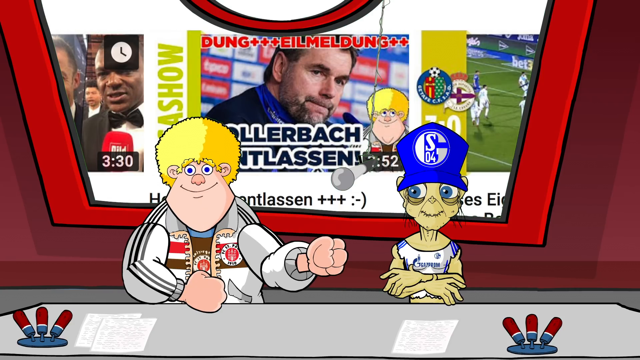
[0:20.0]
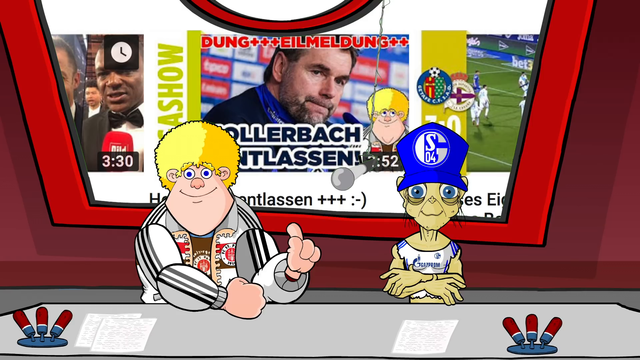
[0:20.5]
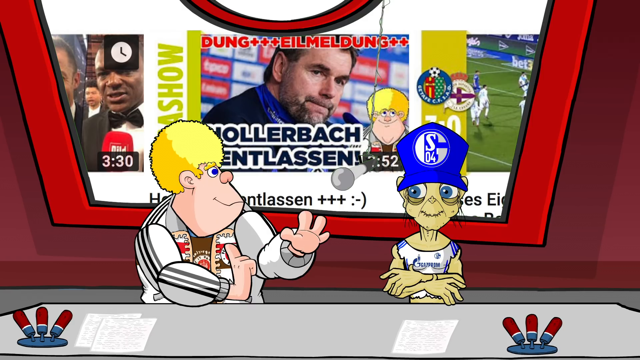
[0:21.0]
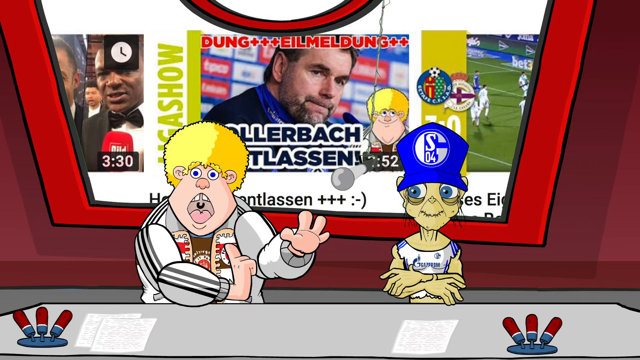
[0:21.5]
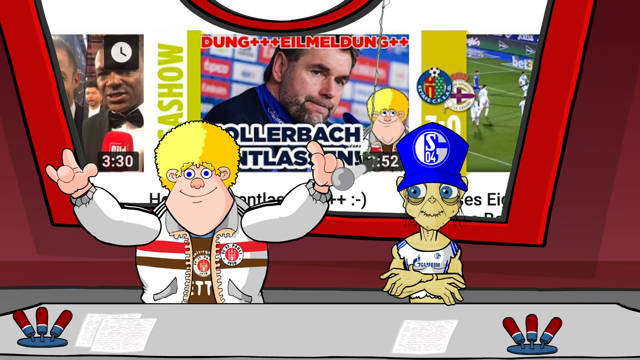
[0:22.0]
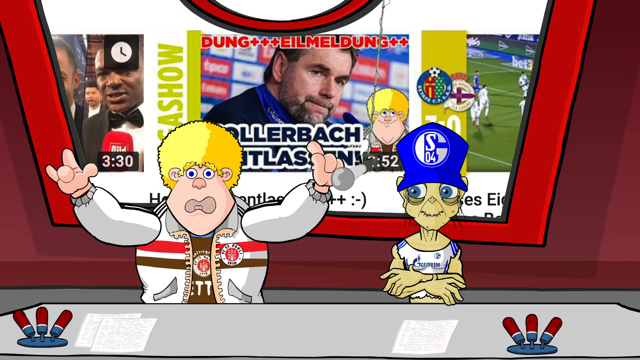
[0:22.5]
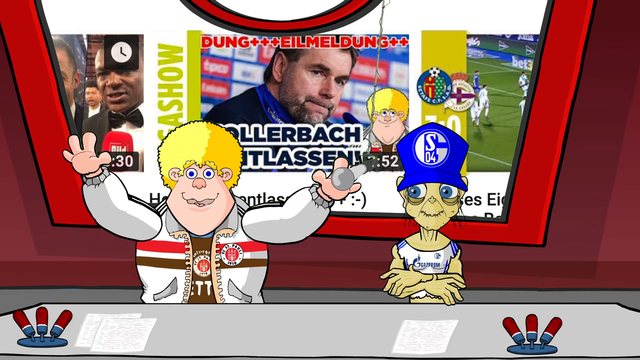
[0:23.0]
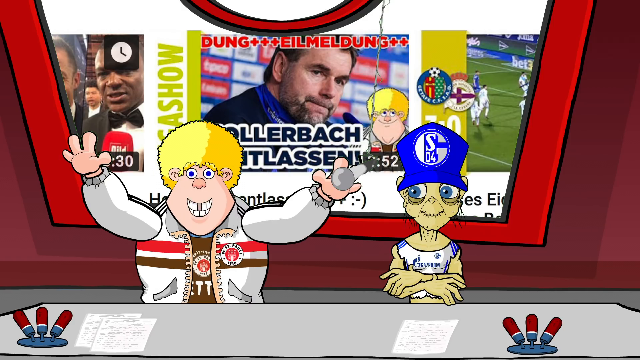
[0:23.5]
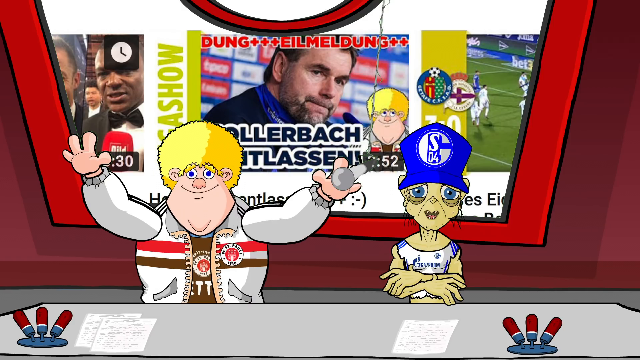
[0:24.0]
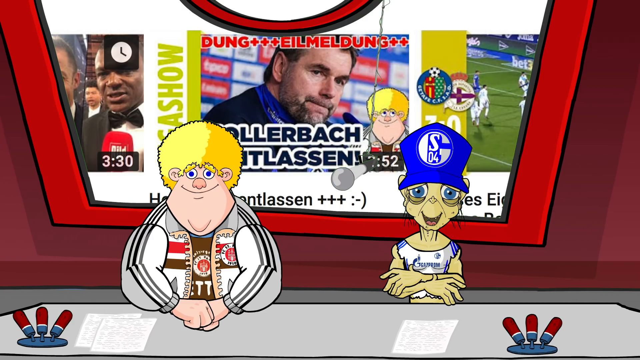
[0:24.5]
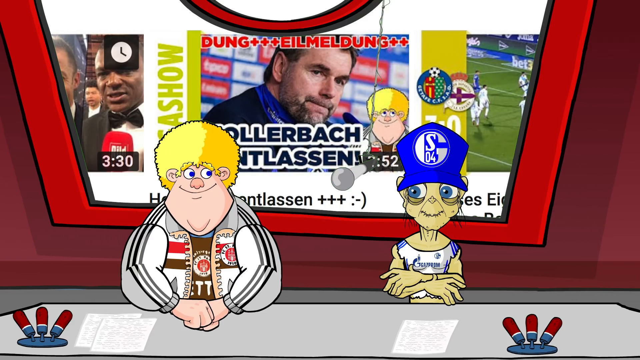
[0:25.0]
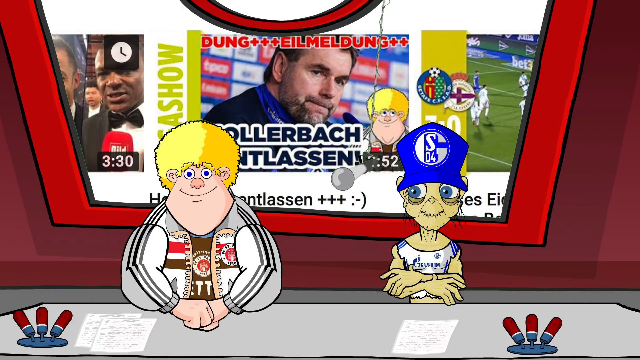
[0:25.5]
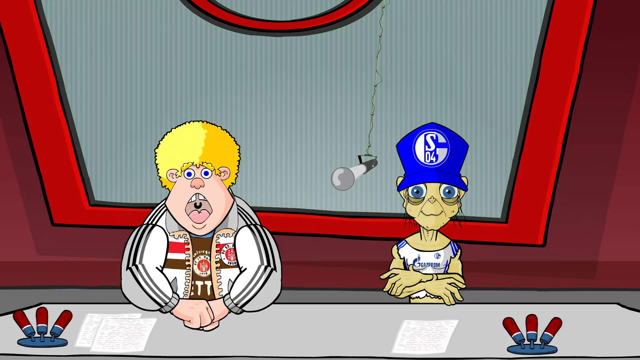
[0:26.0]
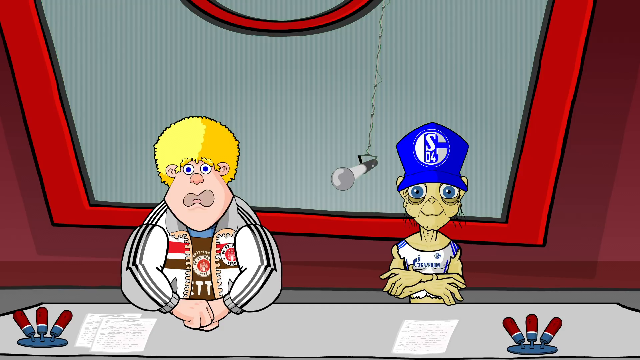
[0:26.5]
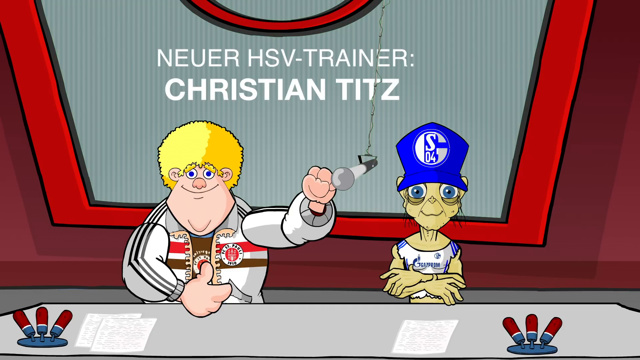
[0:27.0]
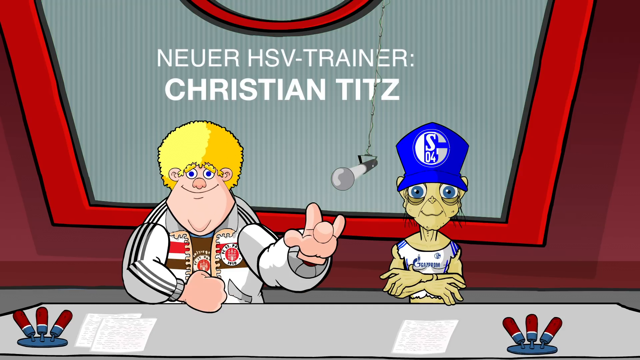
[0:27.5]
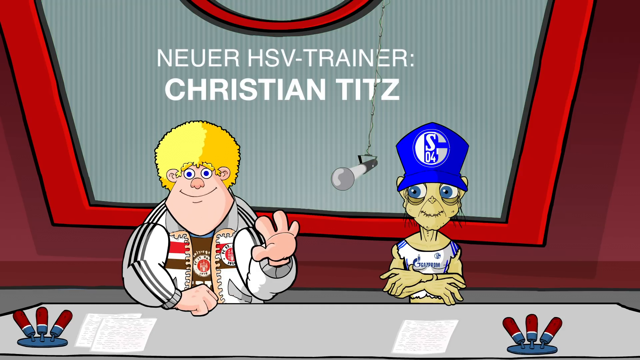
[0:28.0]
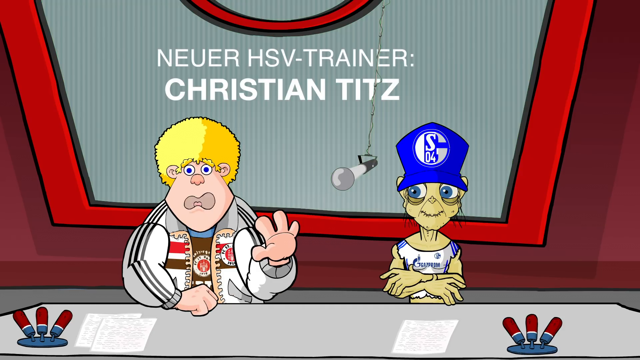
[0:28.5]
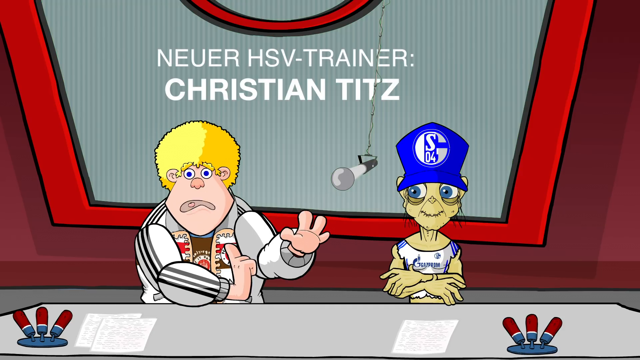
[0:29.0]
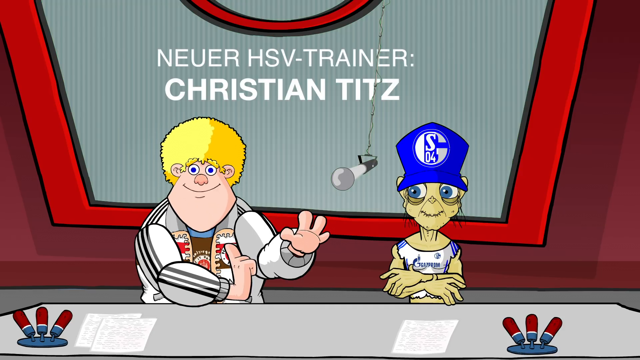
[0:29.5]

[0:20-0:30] The blonde-haired character with a large chin and a blue hat continues to be shown; this figure has gremlin-like skin and blue eyes. Characters are shown behind them, and the mouths of the two are moving as they apparently talk about the content shown behind them. The subjects behind them then swap away to a gray, sort of static screen, with no other subjects or screen swaps after that.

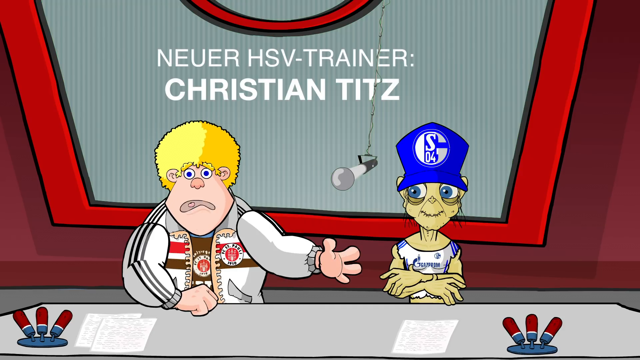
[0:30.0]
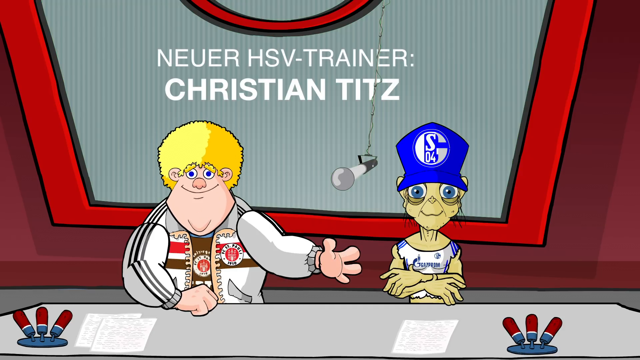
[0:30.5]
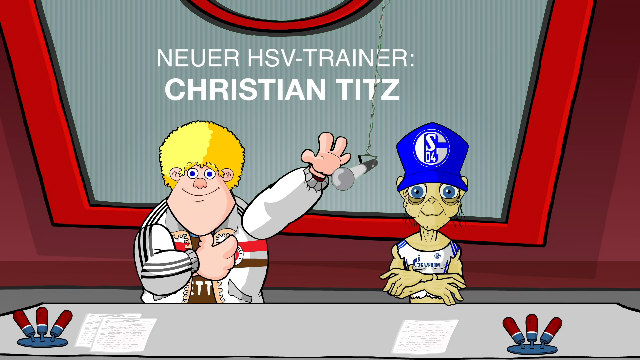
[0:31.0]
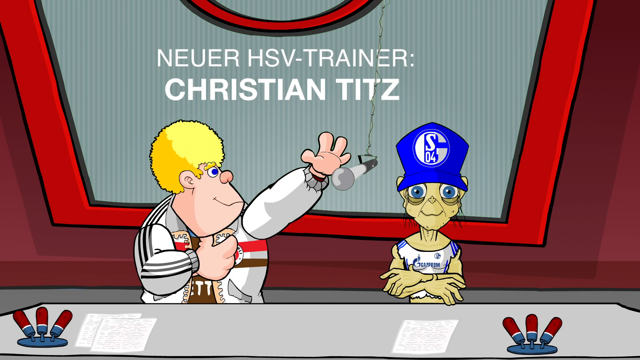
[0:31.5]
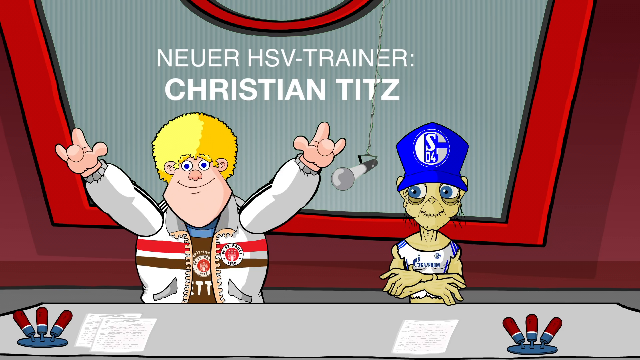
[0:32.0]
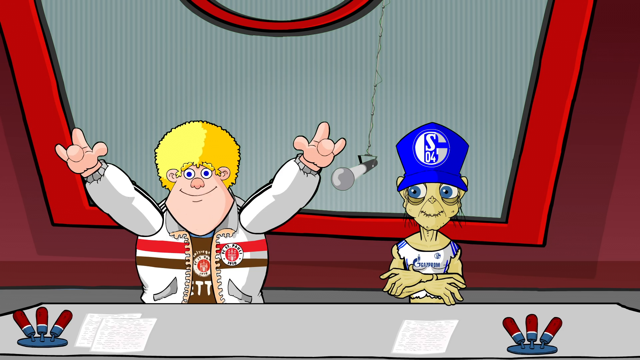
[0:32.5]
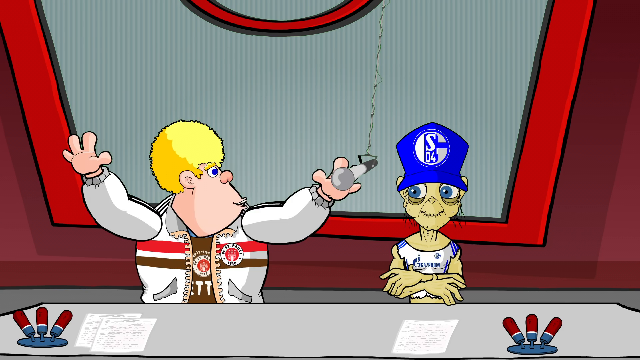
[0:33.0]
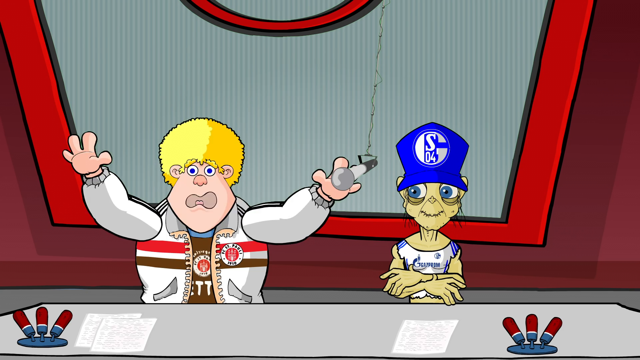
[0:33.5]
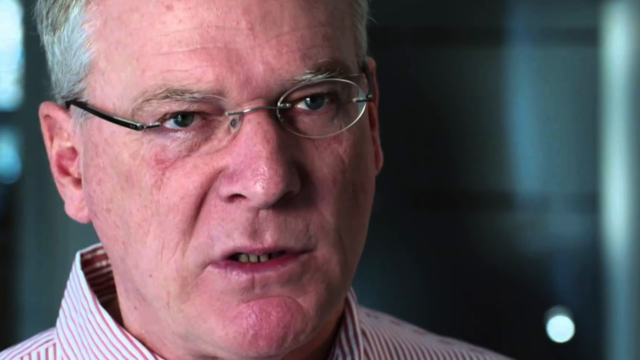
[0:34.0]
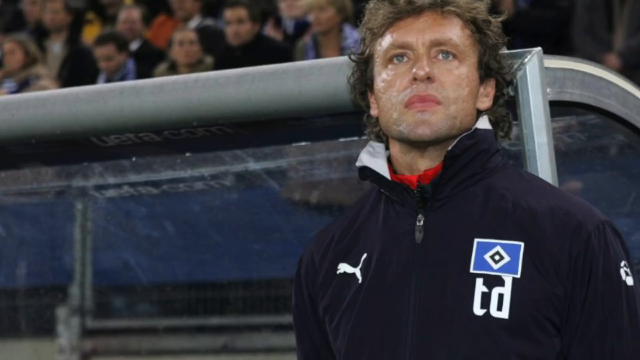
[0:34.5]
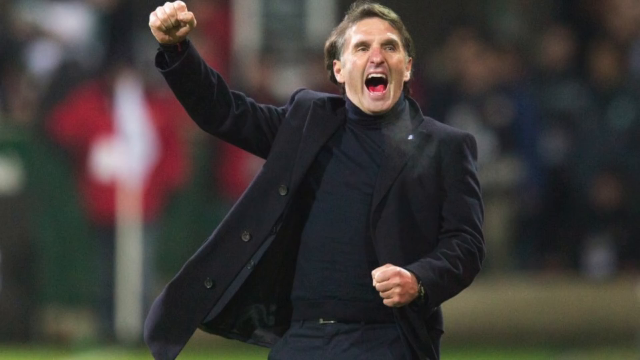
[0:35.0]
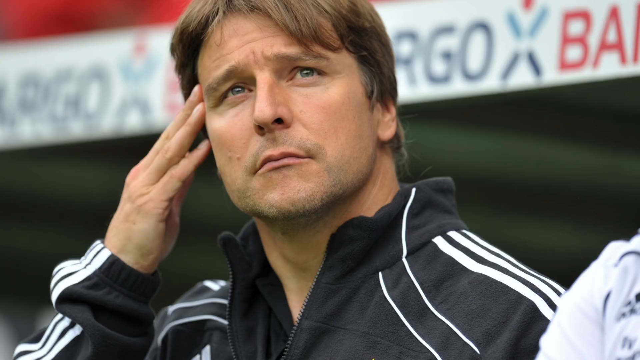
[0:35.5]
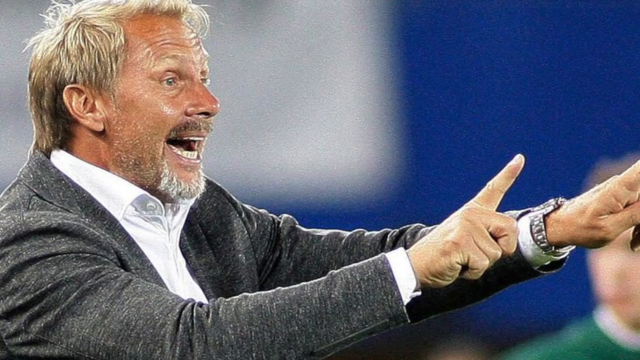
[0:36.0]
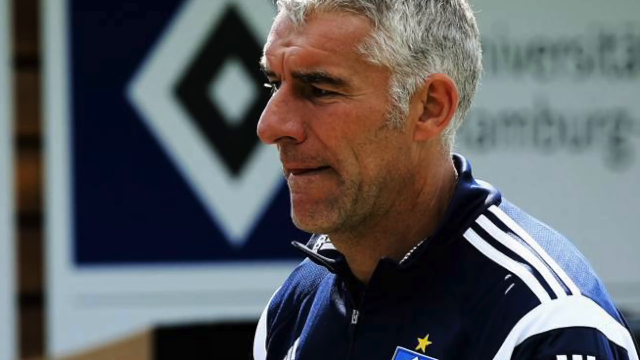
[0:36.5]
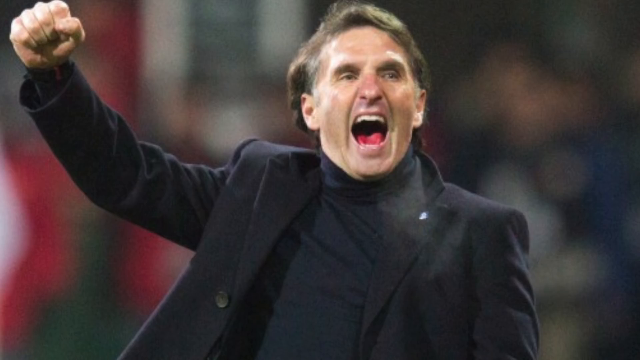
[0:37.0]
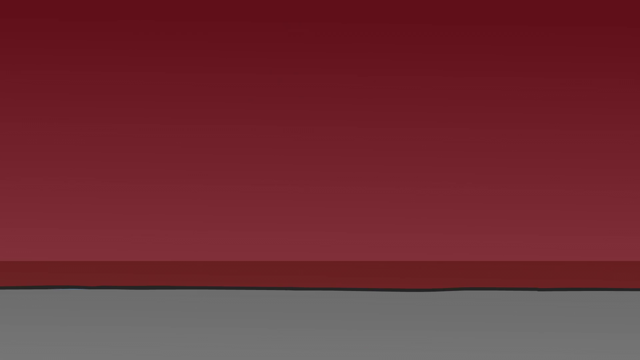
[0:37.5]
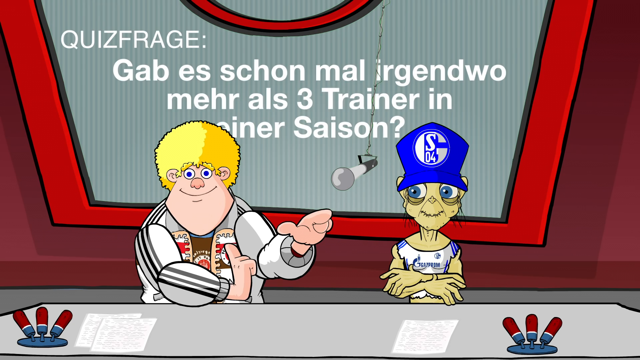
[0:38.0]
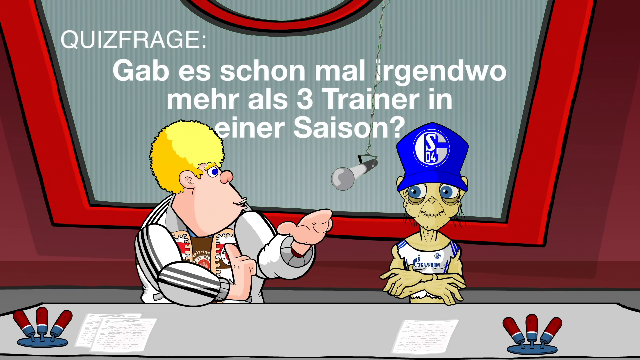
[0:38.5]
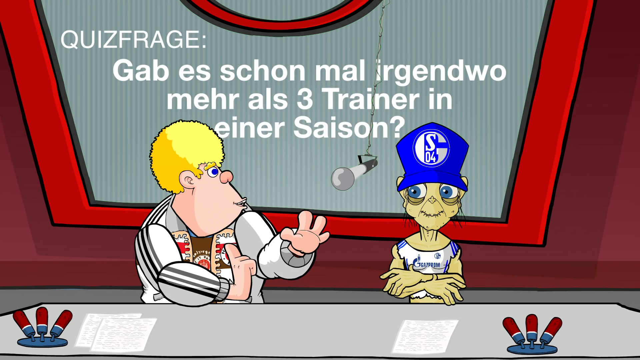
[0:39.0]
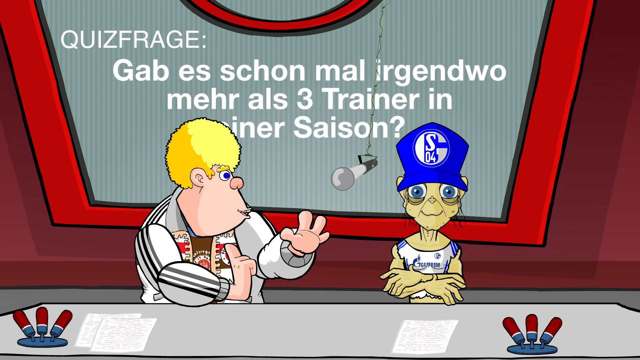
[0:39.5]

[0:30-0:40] The individual with blonde, curly-ish hair is still sitting next to the alien in the news-style video, and the blonde-haired character holds a kind of microphone in her hand. The scene then transitions to a screen showing various different people in short bursts, with a number of apparently Caucasian men between the ages of 25 and 50 shown as it transitions between different pictures. It ends after these changes between the various faces.